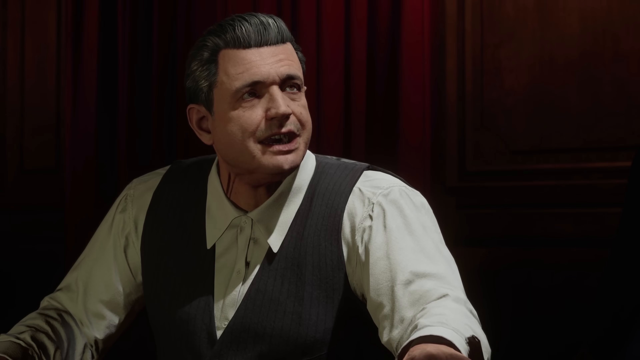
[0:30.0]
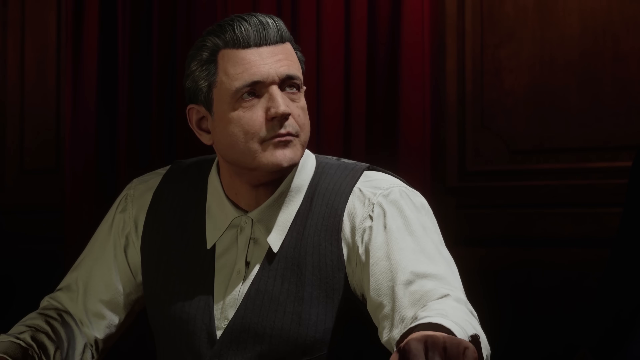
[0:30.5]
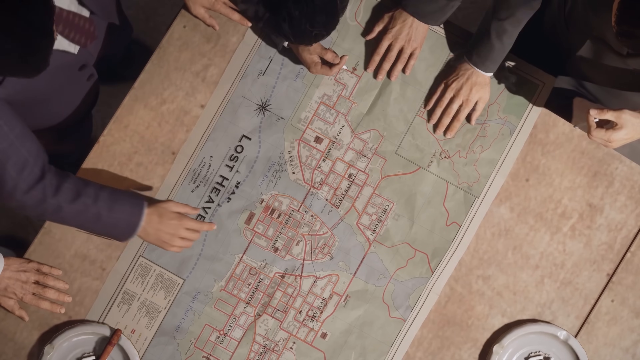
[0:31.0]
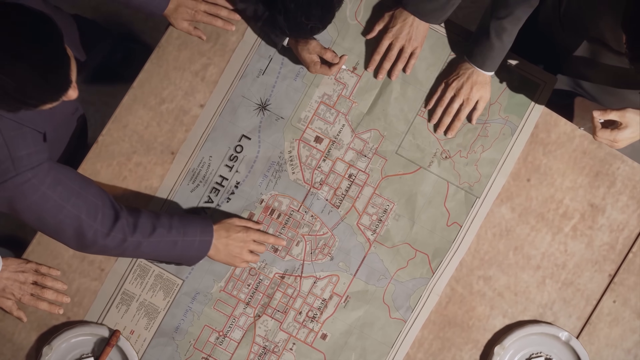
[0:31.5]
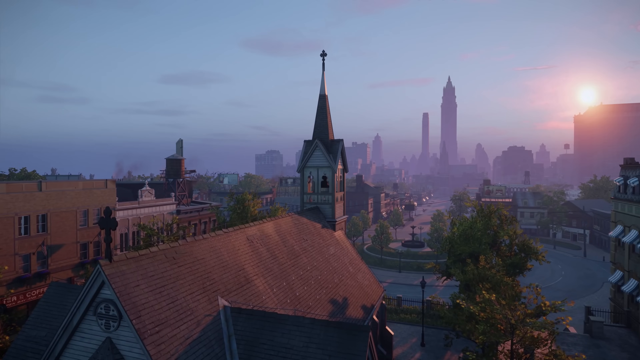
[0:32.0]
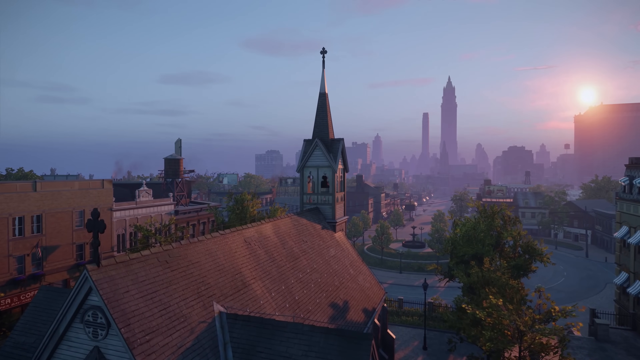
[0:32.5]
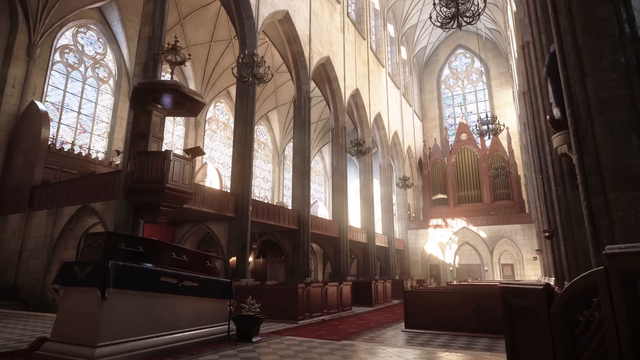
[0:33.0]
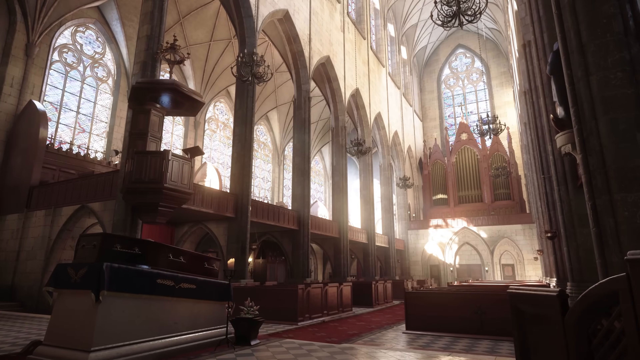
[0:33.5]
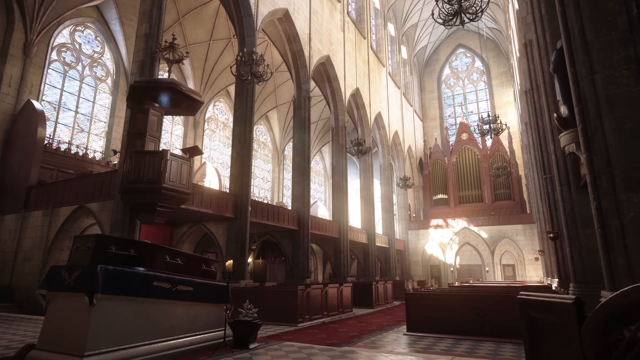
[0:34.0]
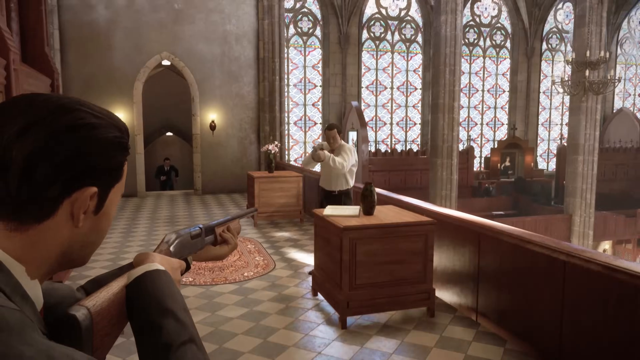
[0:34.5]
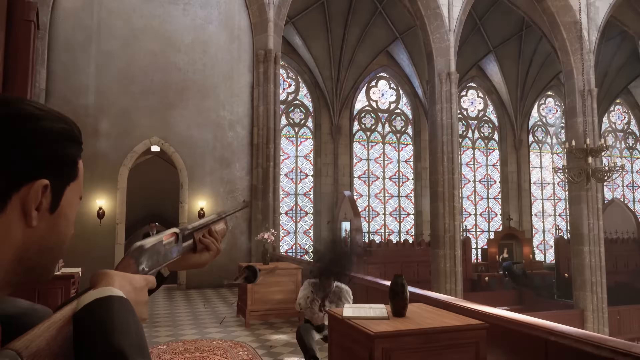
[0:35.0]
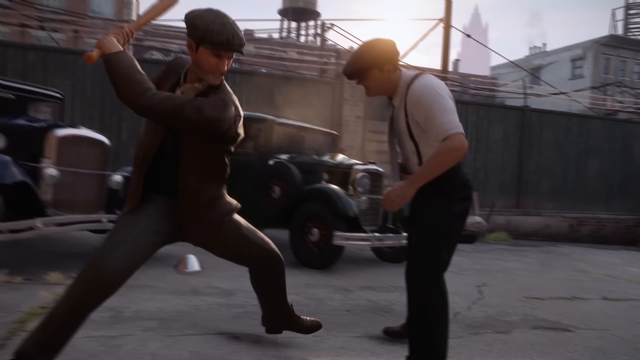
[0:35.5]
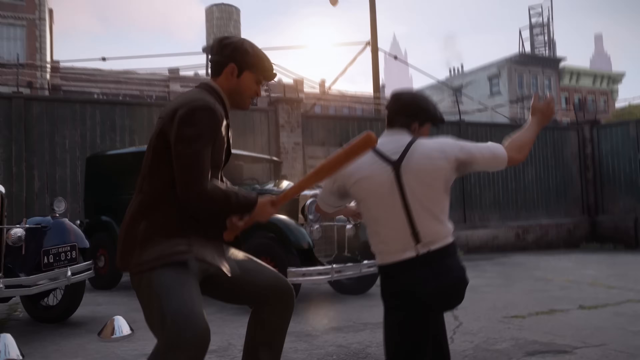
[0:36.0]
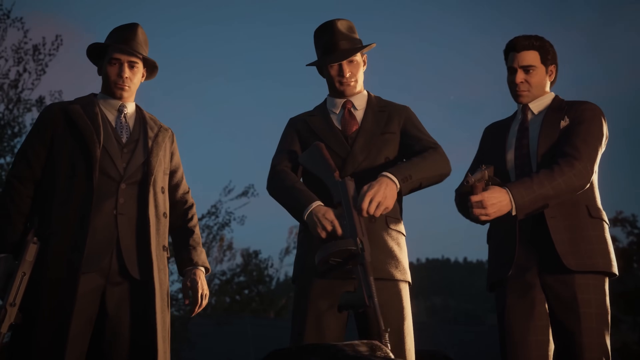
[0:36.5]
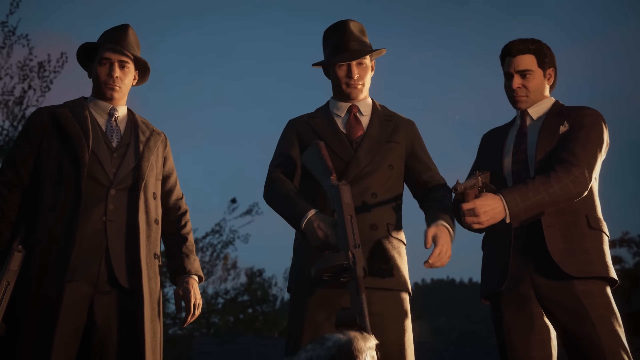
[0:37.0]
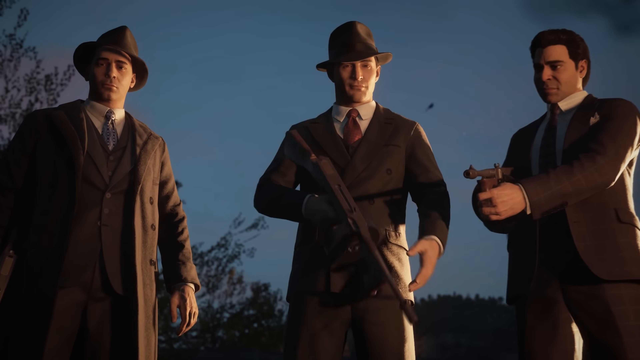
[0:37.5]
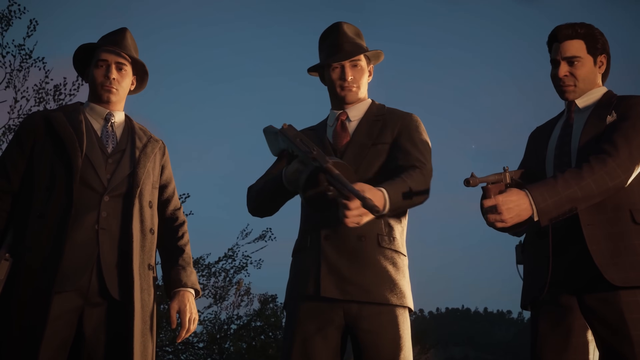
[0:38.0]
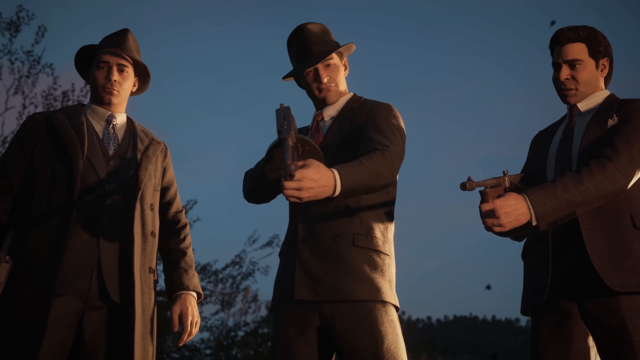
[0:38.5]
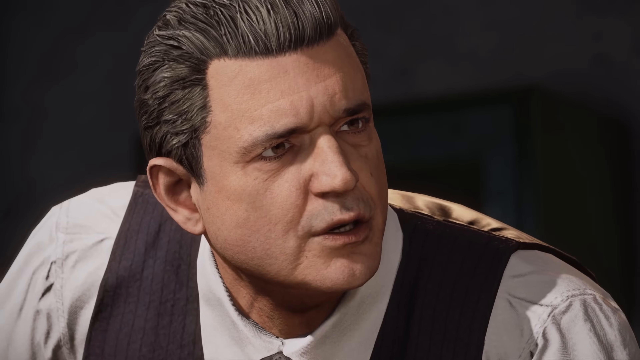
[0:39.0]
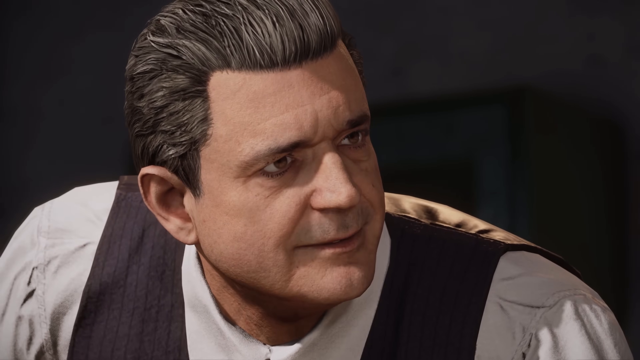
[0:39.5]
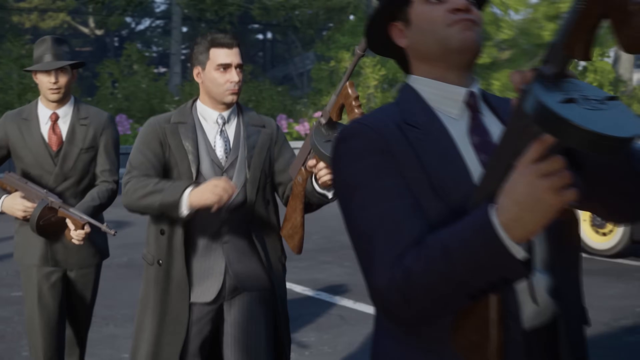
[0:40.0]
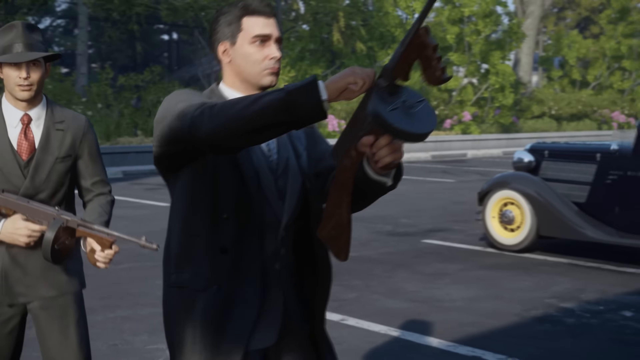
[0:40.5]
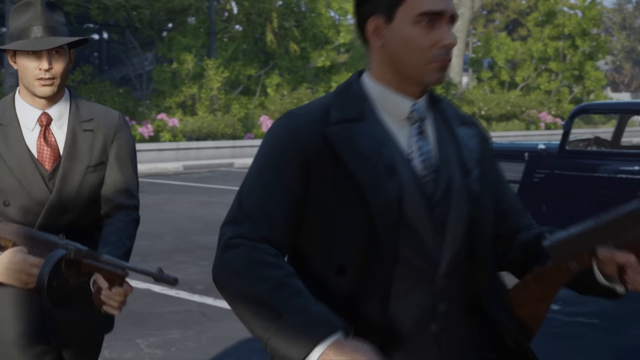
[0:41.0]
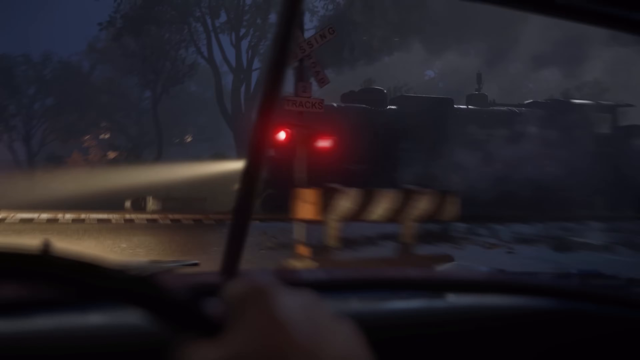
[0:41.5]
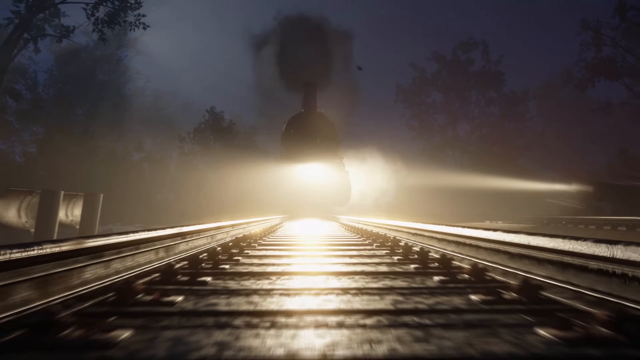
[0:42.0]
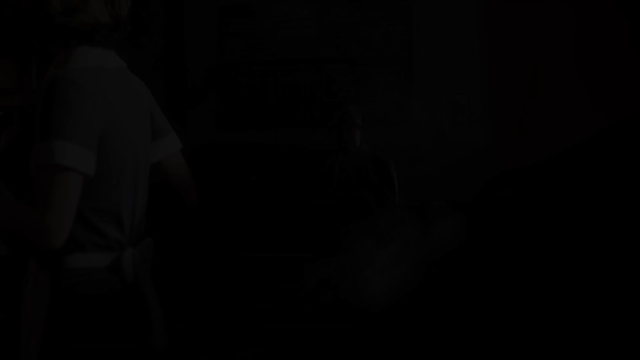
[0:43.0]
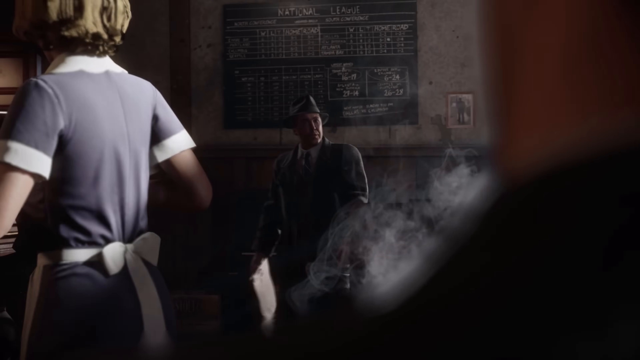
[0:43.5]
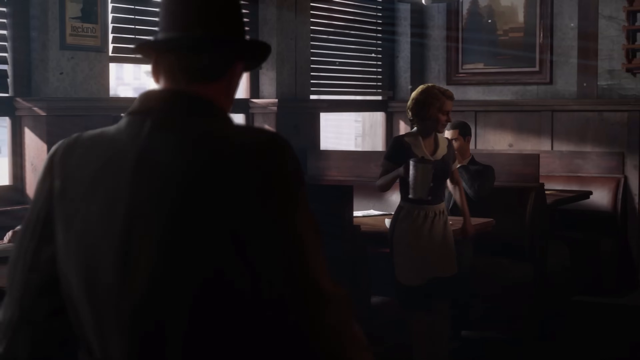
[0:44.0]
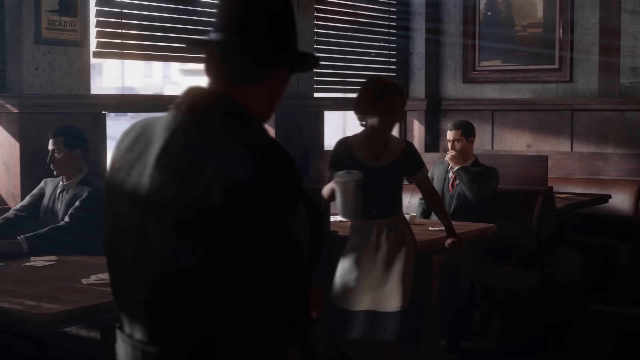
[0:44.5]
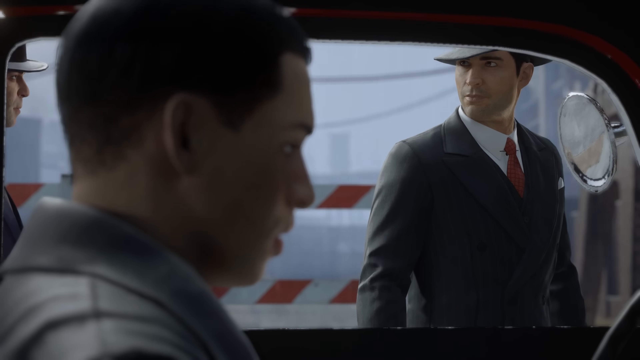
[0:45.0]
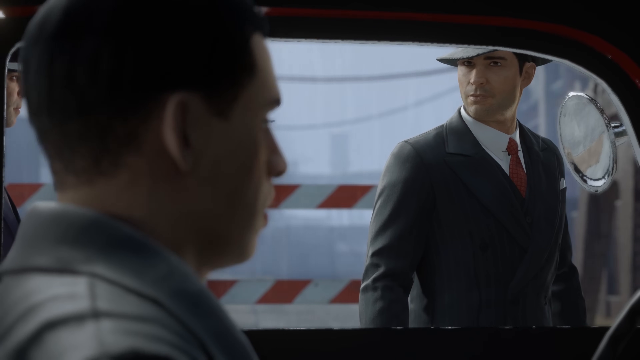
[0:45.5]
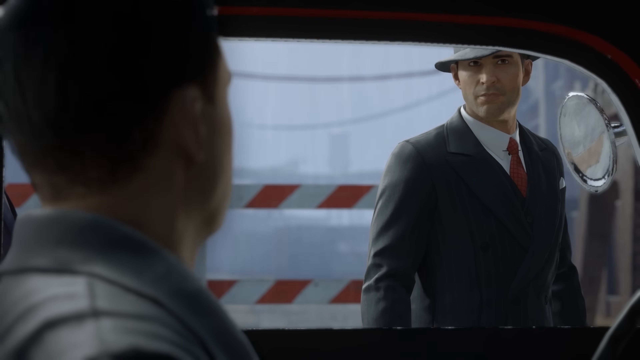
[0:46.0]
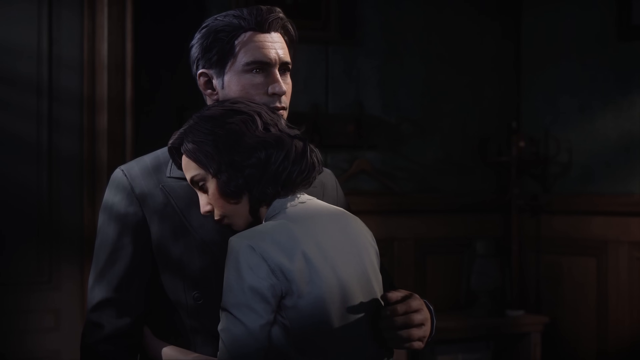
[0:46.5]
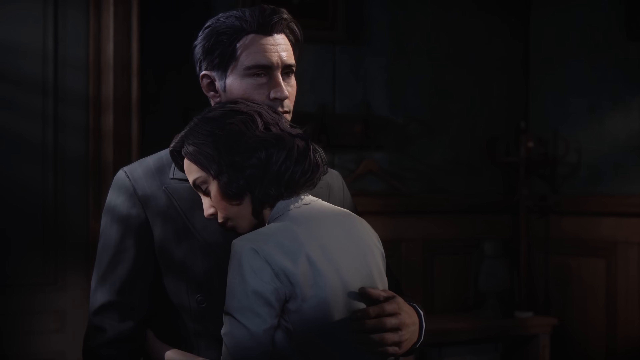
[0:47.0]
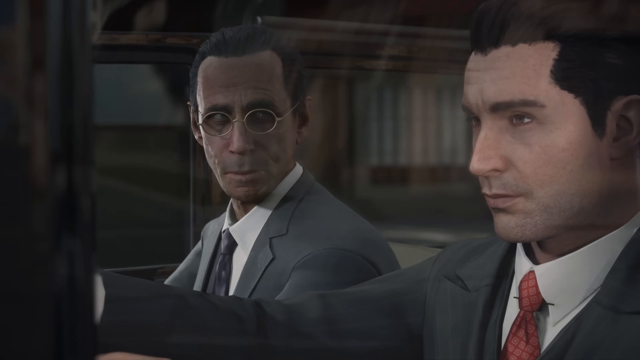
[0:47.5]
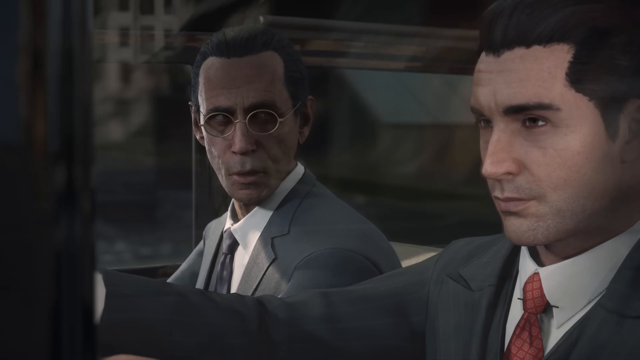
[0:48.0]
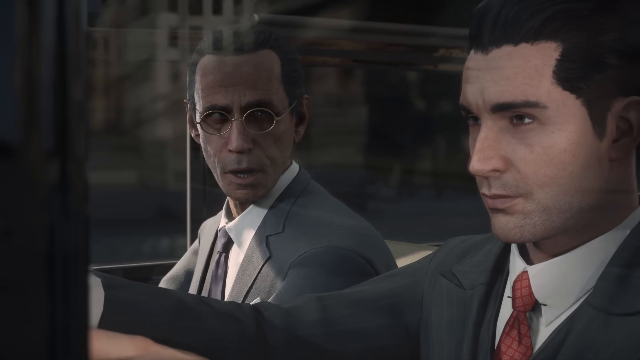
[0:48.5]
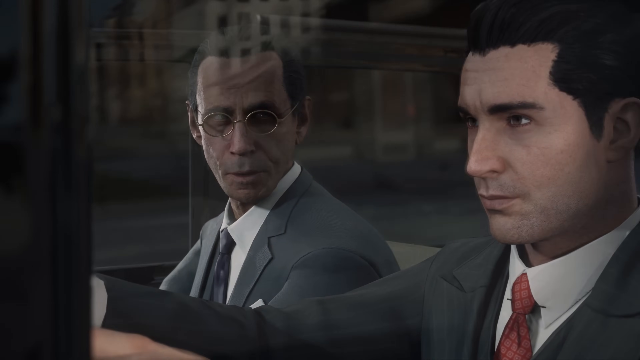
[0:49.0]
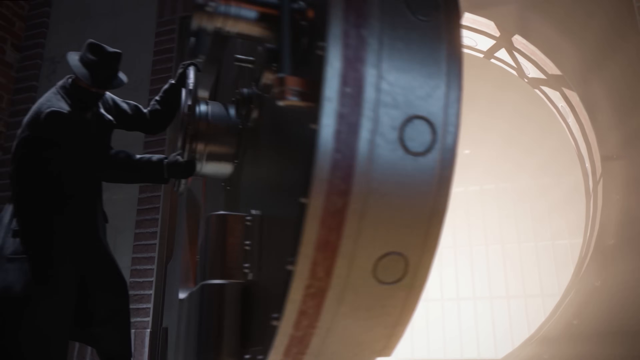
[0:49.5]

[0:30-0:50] A man sits at a table talking to somebody. Next, a map is on a table with lots of people standing around it, though mostly only their hands are visible, and one of them points at a part of the center of the map. The scene moves to a quite pretty townscape during daytime with the sun bright in the sky; there is a tall tower in the background, some other high-rise buildings and lots of trees around. Inside a church, light shines through the windows, and somebody with a gun has just shot somebody. One man hits another with a baseball bat. Three men stand in a row, two of them holding guns, and then walk across what looks like a car park. What appears to be a sequence from inside a vehicle shows it approaching a train crossing as a train approaches and the lights are red; the vehicle seems to drive onto the track anyway, and the last view is of the train coming towards the camera. A very quick view shows the inside of what appears to be a diner, with a waitress carrying a jug and a man sitting at a table. A man is in a car with somebody standing outside it. A couple appears: a man looks into the distance while a woman, his friend or possibly his wife, stands with her head on his shoulder; both look sad. Two men are in a car, one driving and the other talking.